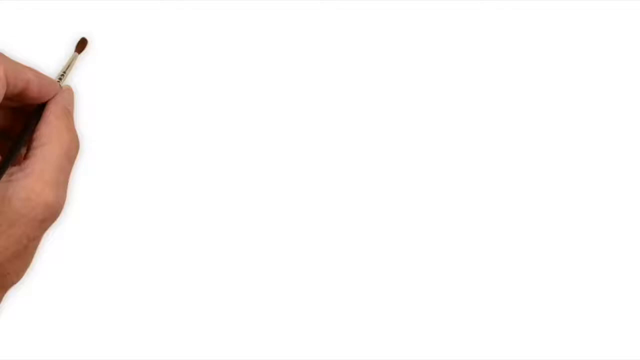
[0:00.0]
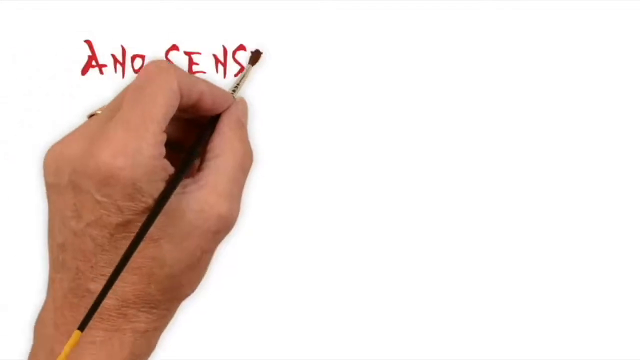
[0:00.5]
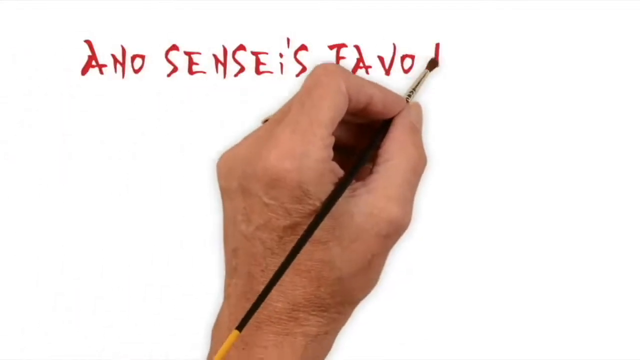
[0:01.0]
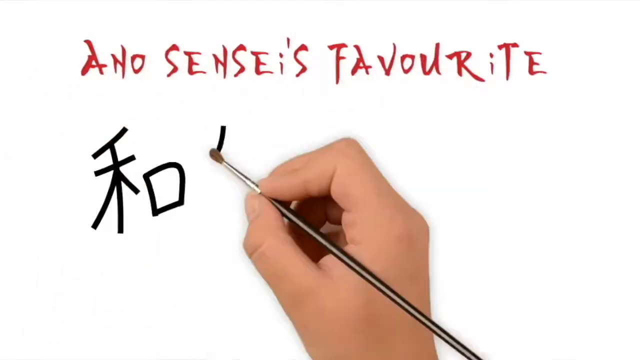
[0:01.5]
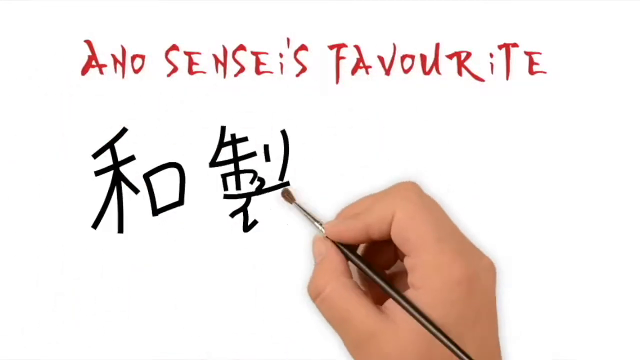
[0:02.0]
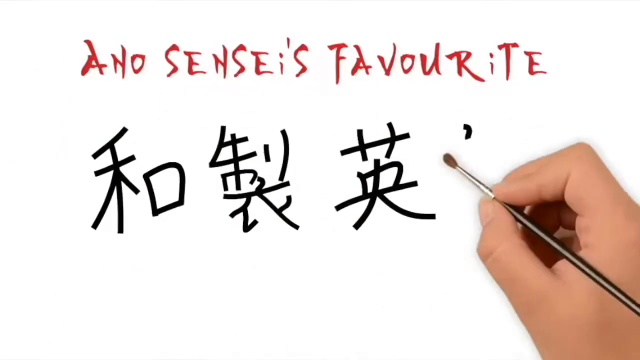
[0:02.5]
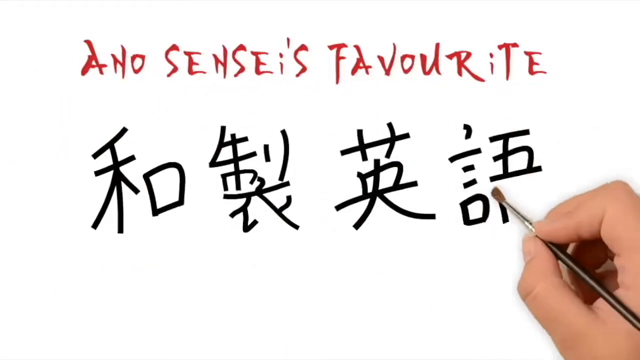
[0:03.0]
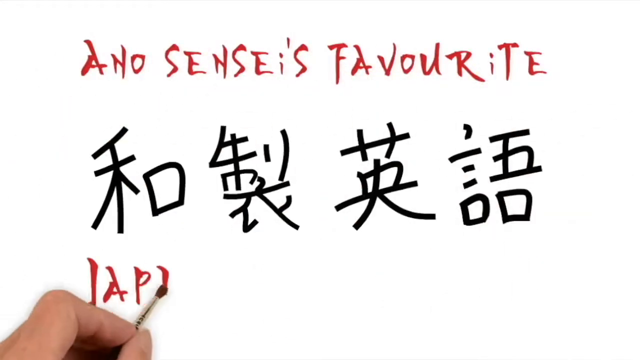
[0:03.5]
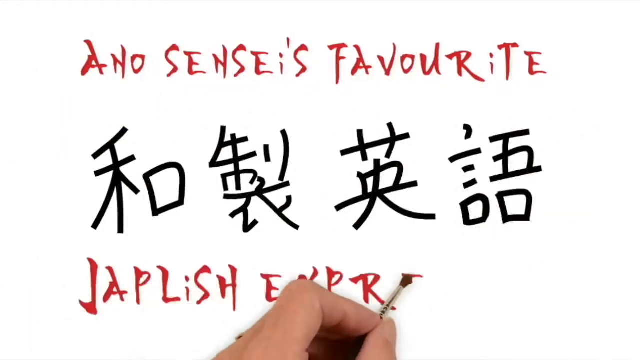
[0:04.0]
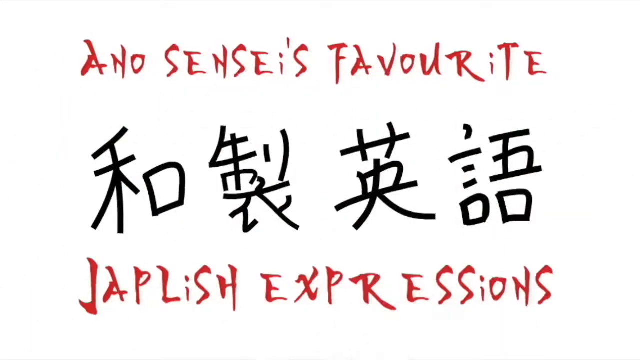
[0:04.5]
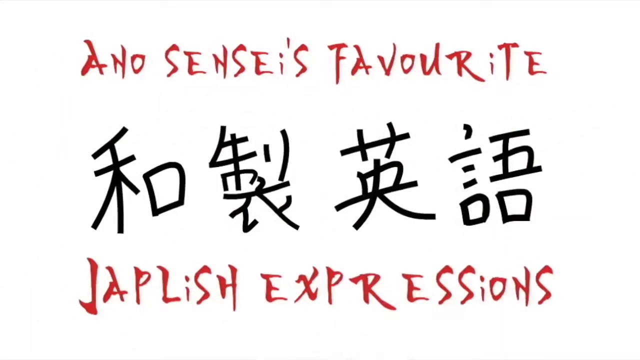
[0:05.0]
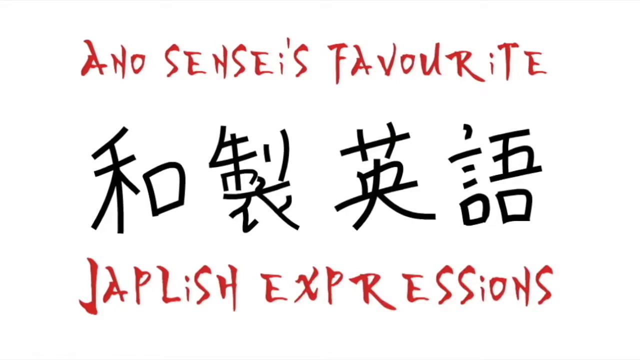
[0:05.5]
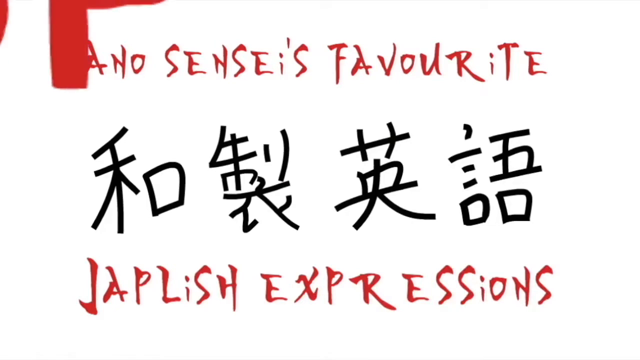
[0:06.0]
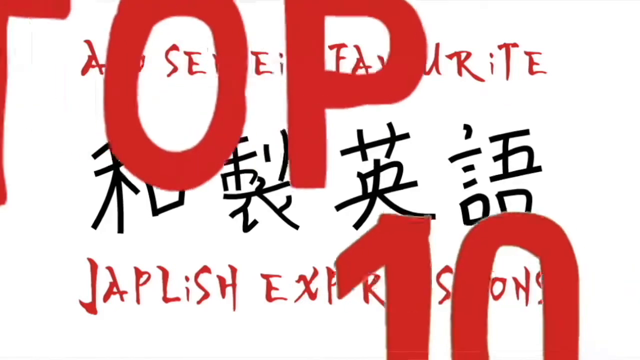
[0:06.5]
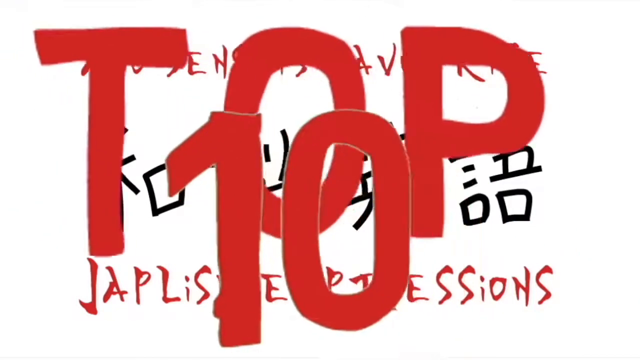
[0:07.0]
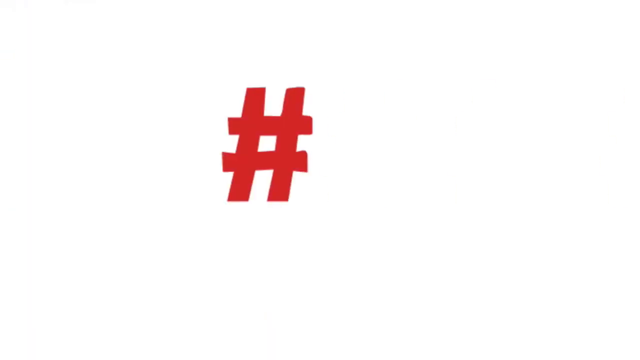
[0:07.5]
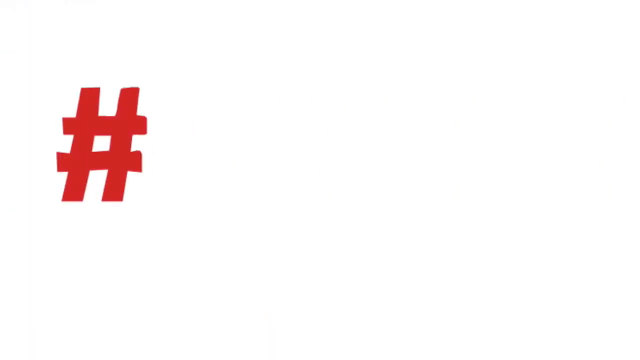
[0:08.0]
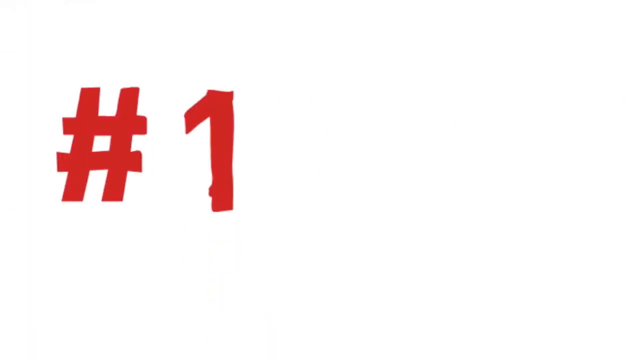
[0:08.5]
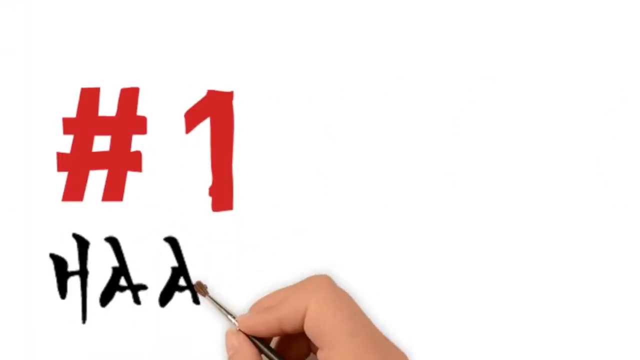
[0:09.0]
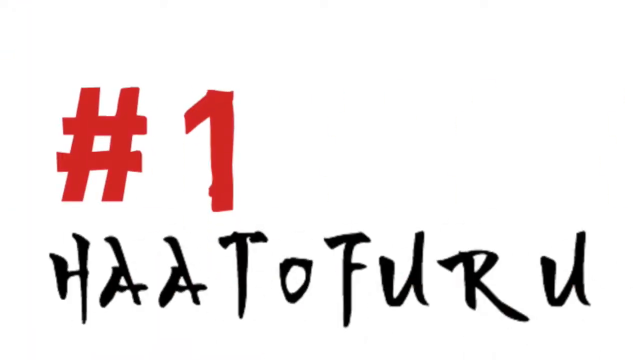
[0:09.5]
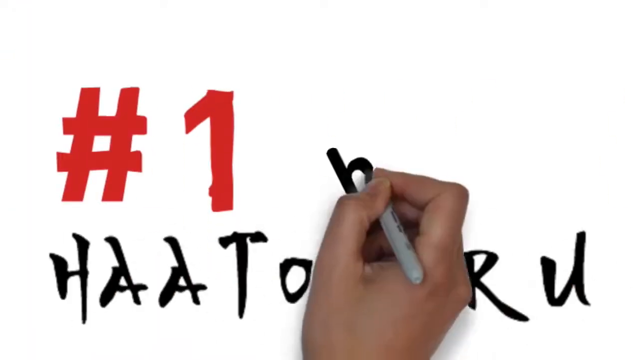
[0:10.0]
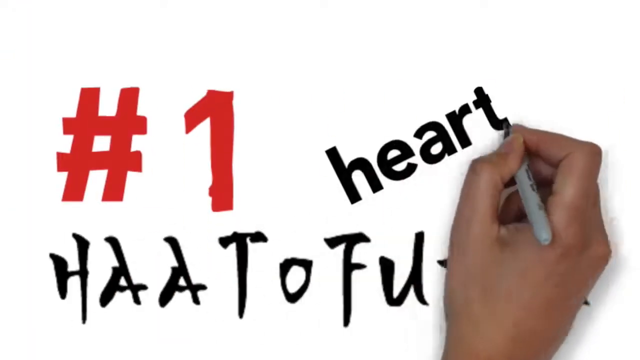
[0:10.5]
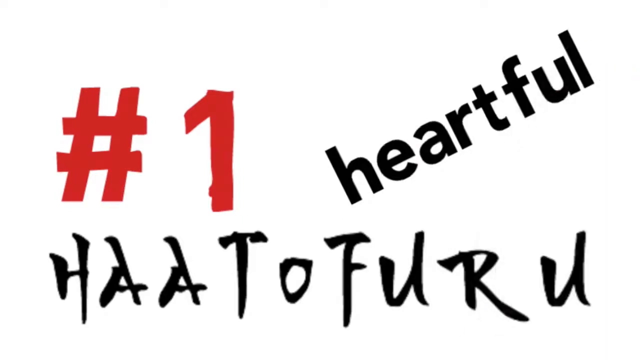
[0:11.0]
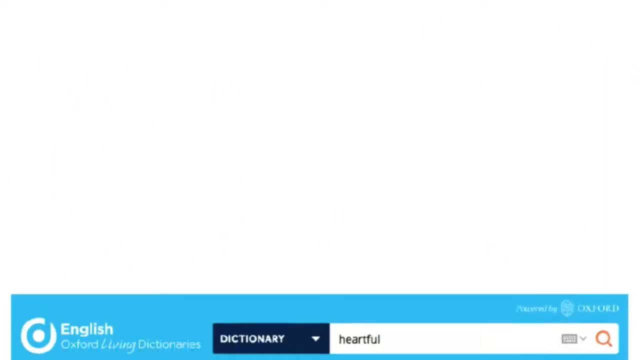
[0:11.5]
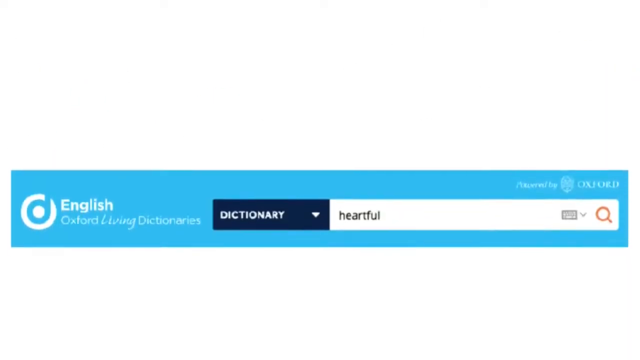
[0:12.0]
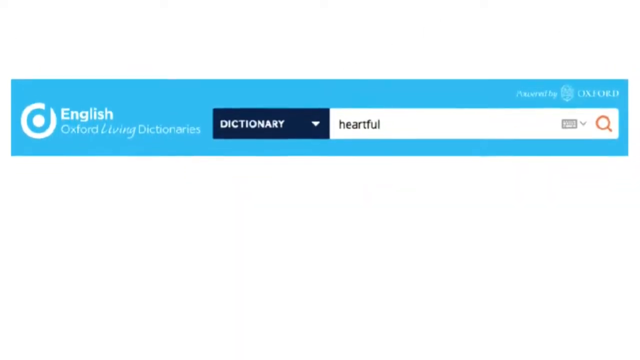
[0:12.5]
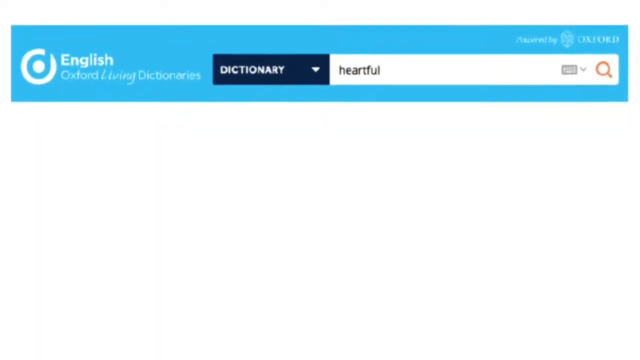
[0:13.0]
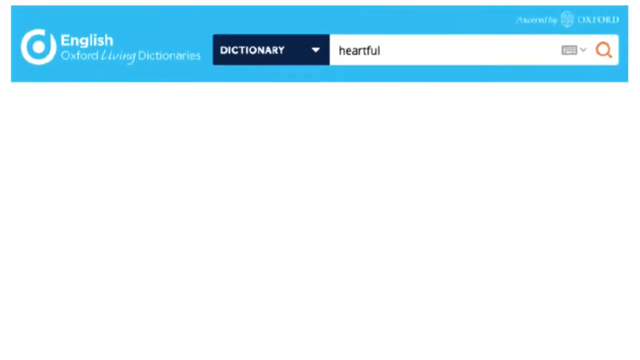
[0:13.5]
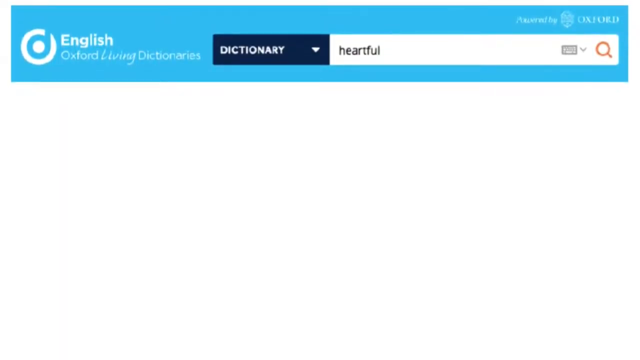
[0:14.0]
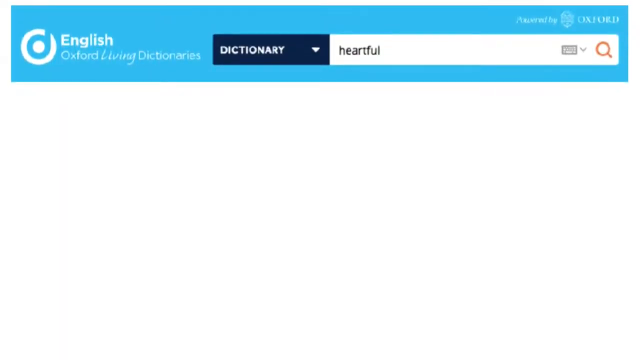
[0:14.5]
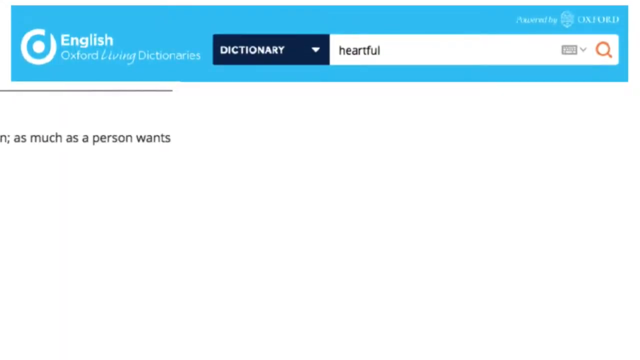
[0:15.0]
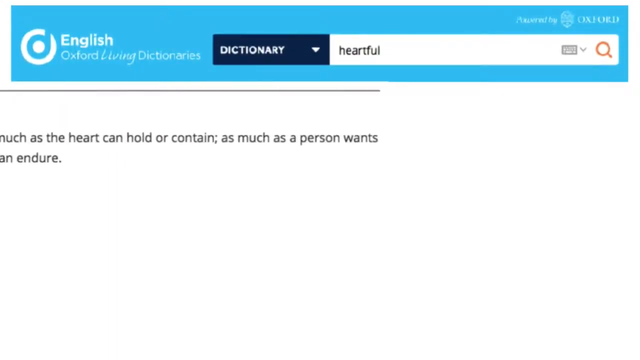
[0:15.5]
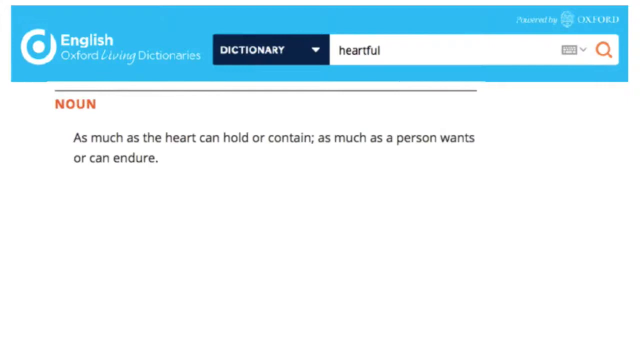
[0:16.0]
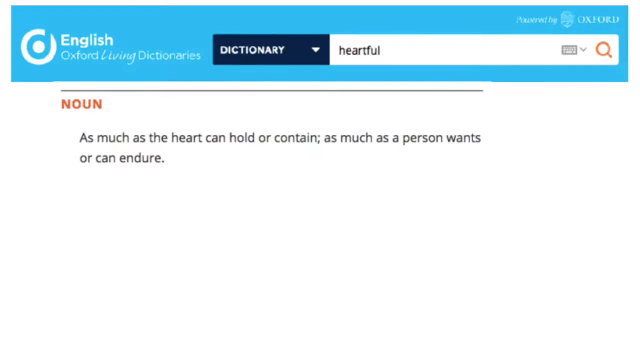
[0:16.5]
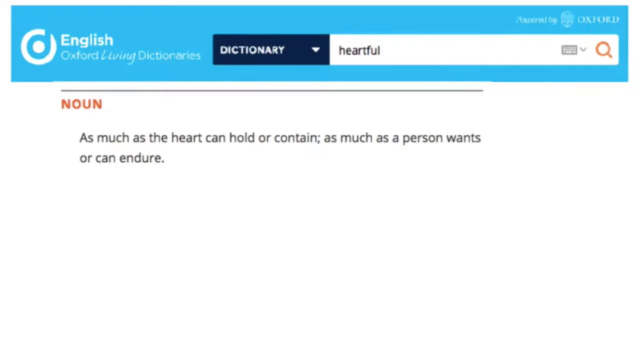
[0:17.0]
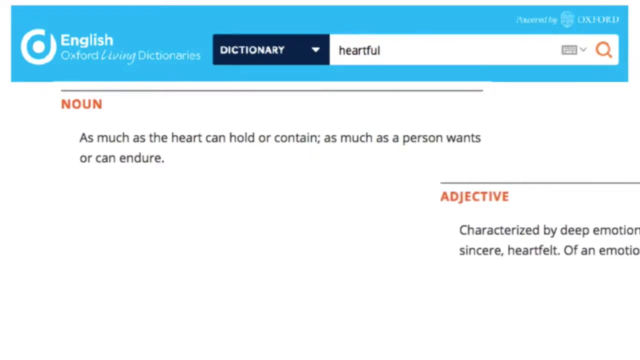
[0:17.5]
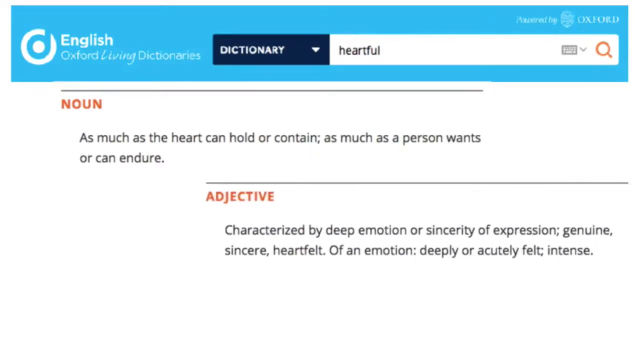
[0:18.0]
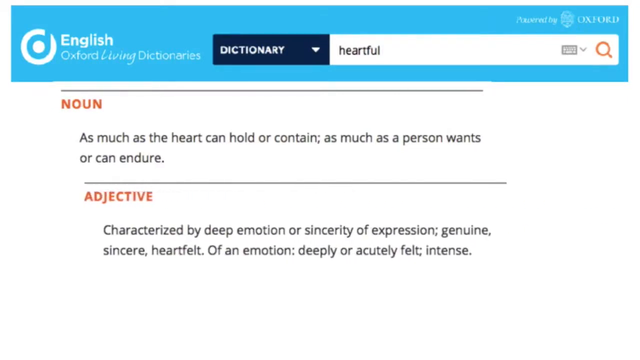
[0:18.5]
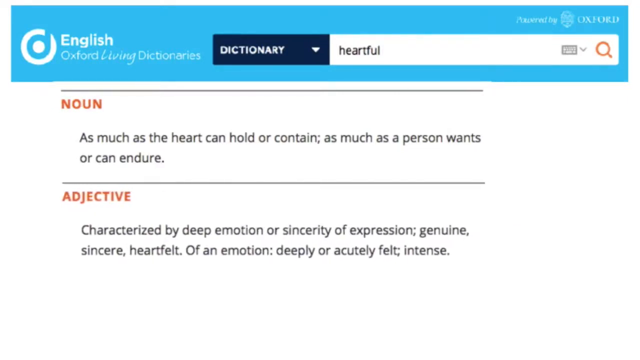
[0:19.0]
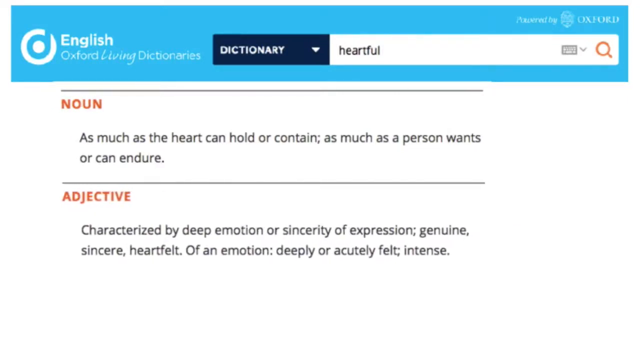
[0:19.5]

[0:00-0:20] A predominantly white background fills the screen, though toward the bottom it seems to form a gradient, turning from white to gray and then to black at the very bottom. The image stays static for quite a while. On the left side there is part of a left hand: only the thumb and forefinger are visible, with their tips pressed together. What appears to be a wooden match is behind the pressed thumb and forefinger; it does not appear to be held between them but looks like it is just laying behind them. The match has a wooden body and an oval, red tip. Nothing else is visible: no people, no rest of the hand, and no writing on the screen.